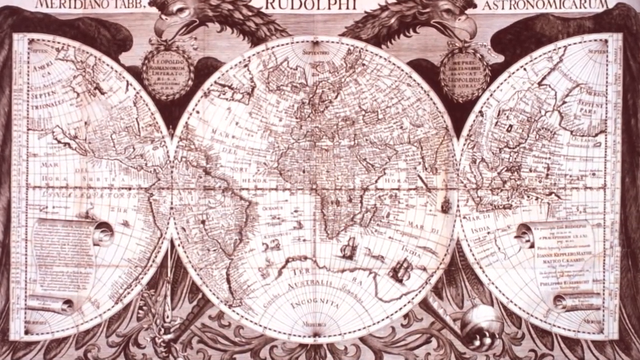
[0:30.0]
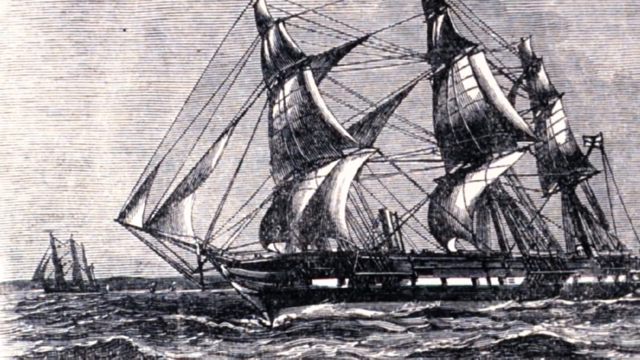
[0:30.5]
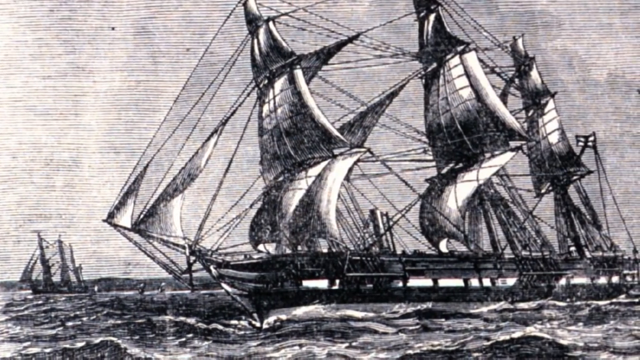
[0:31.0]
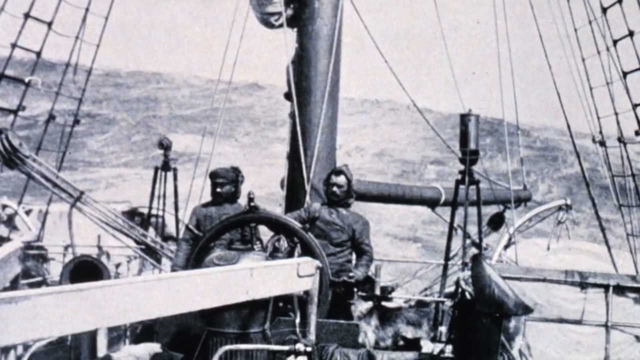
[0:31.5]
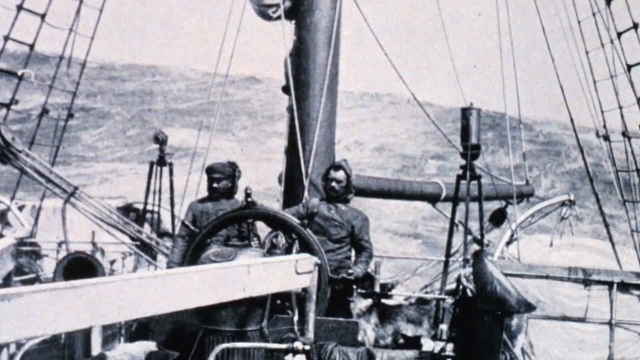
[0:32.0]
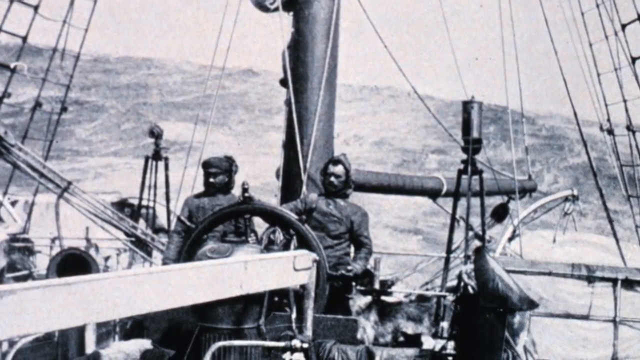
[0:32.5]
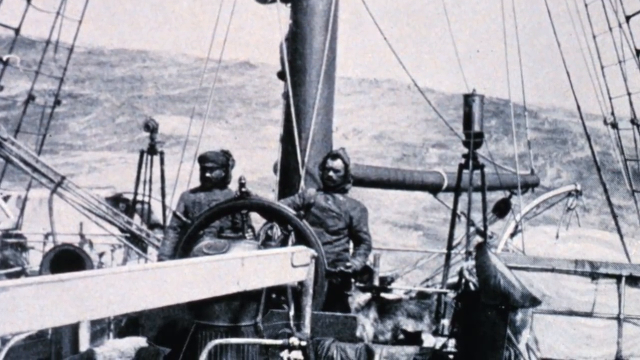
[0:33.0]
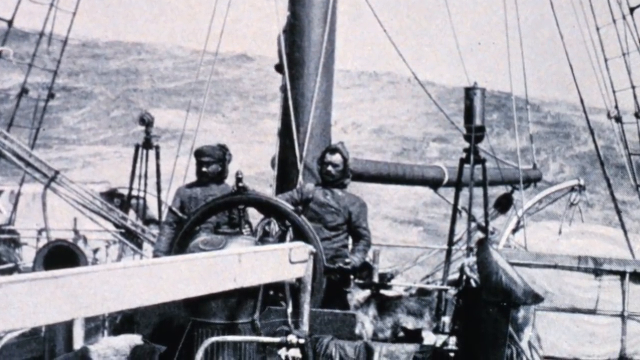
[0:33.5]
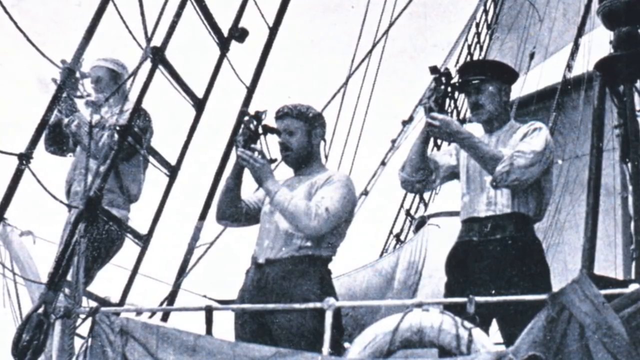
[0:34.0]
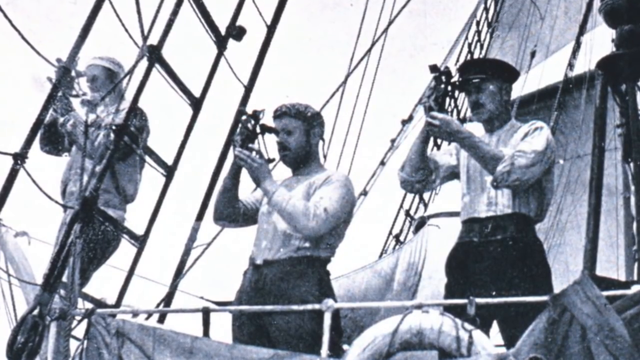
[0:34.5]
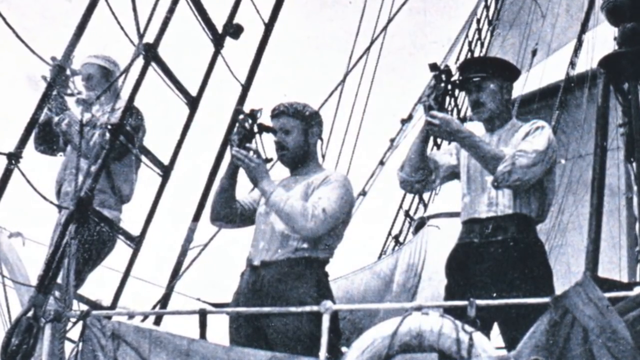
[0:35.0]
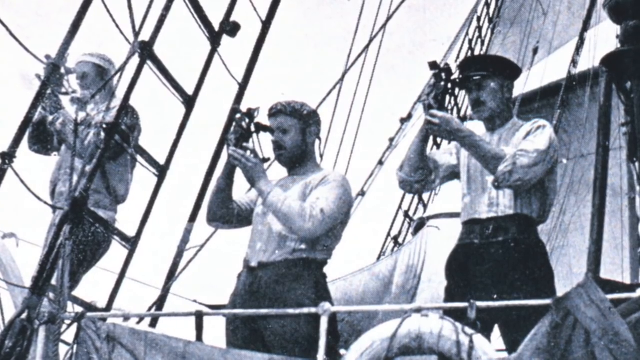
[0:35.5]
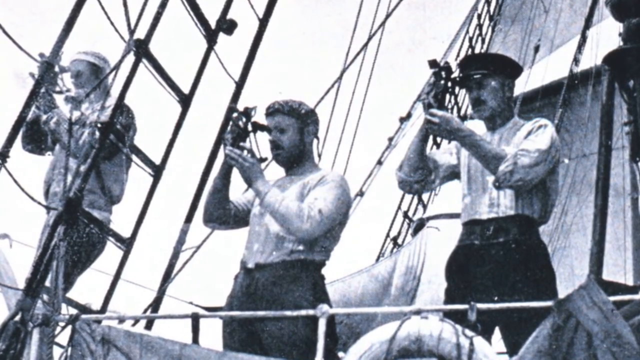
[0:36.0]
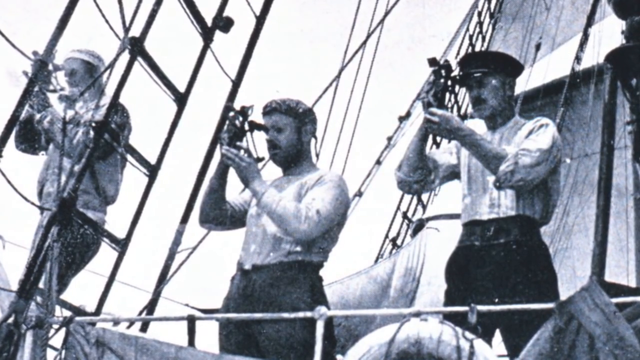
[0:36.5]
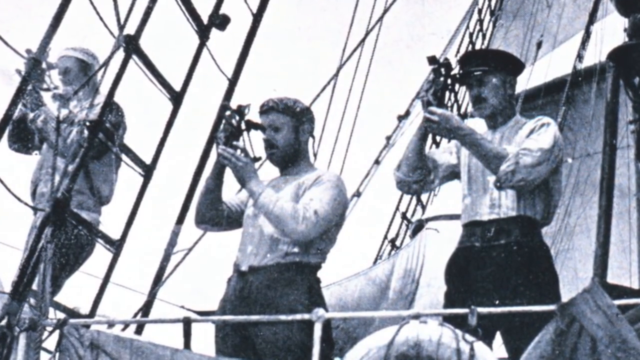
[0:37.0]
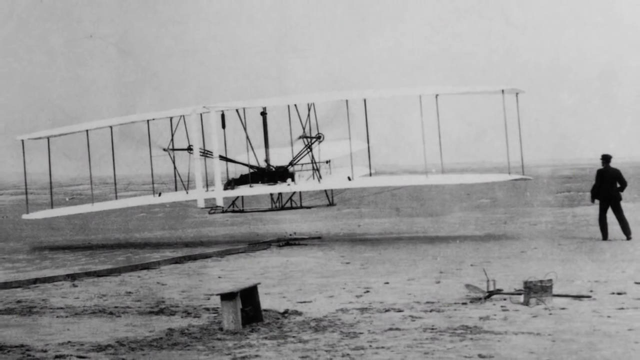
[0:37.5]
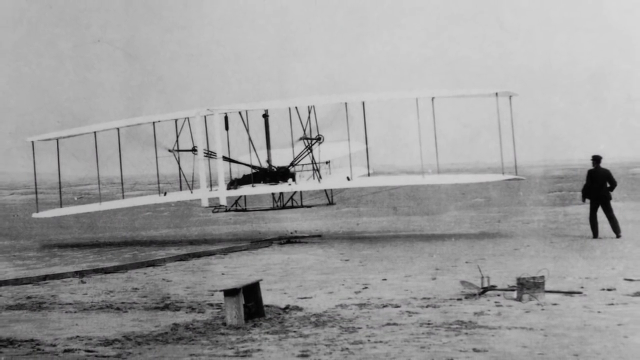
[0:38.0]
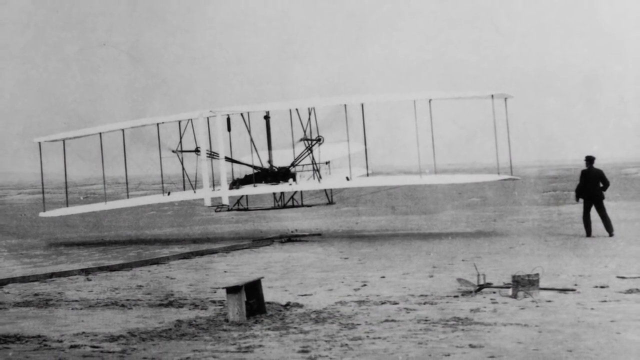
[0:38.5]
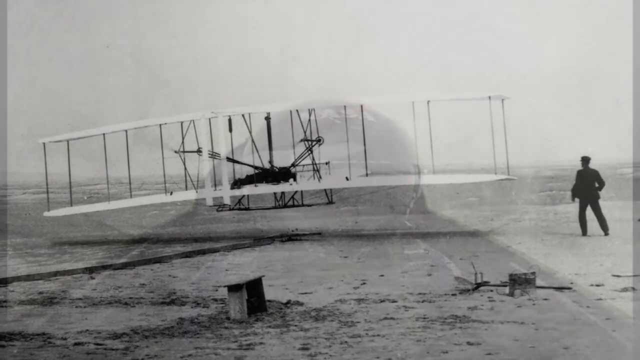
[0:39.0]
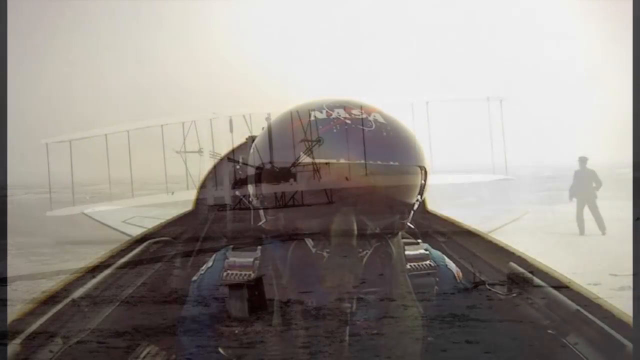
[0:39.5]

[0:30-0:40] The map is still there. The middle part of the map shows a 2D flat shape of the world, and because the world is cut in half, its right side appears on the left side of the map and its left side on the right side. There are two animals with long necks like giraffes, but they are not giraffes and are unidentified. Next is a black and white painting of two boats: one is really big, and the other is smaller and seems to be at a further distance, with its point heading toward the left side of the screen. Different images of crewmen follow, and then an airplane from the early 1900s.